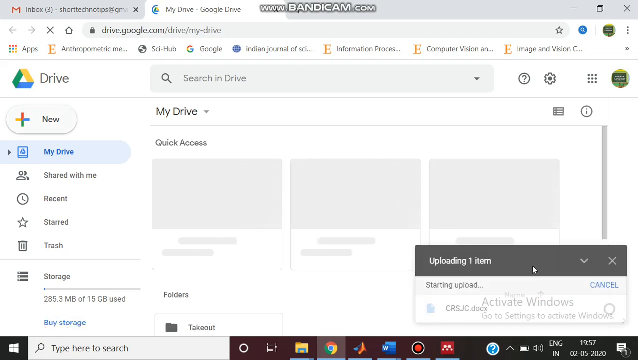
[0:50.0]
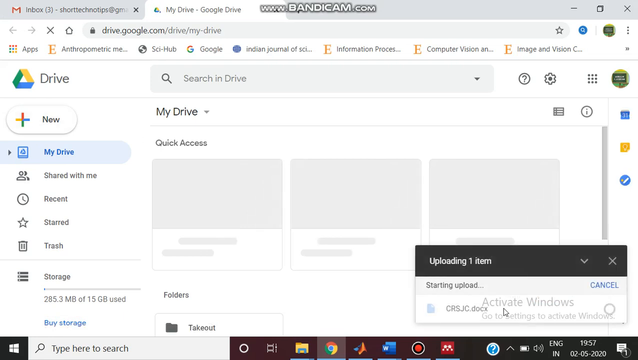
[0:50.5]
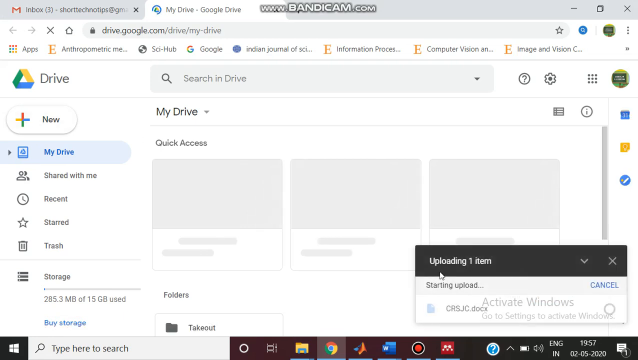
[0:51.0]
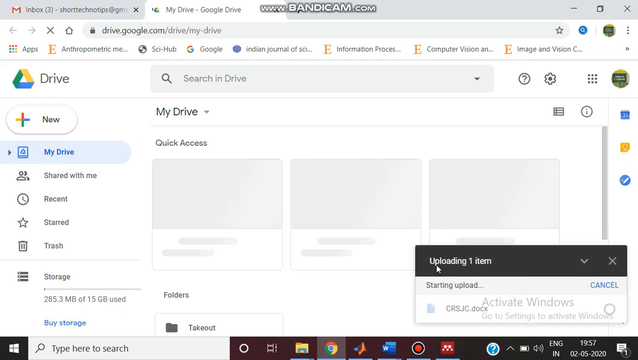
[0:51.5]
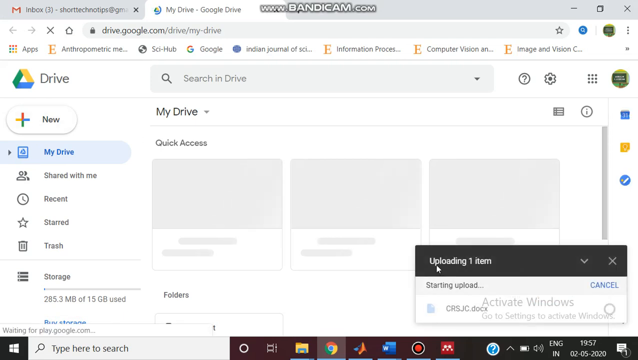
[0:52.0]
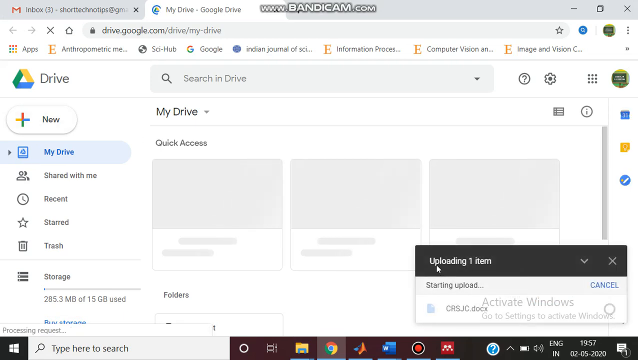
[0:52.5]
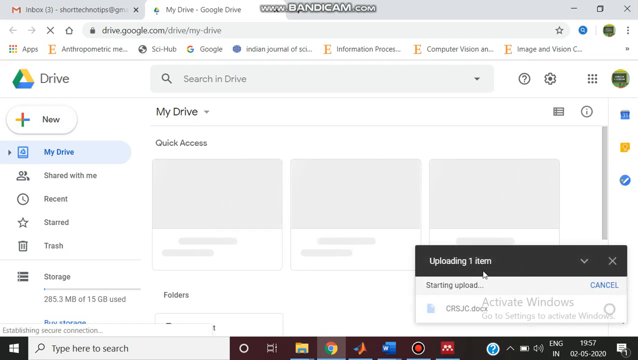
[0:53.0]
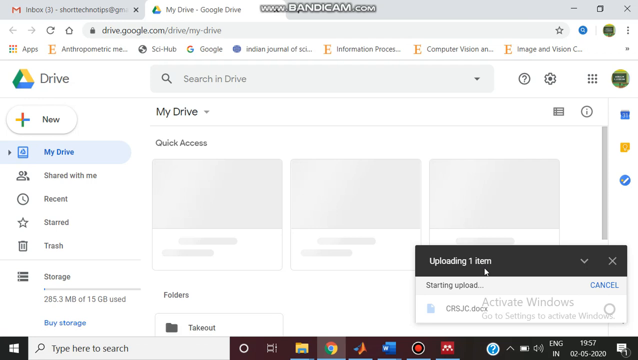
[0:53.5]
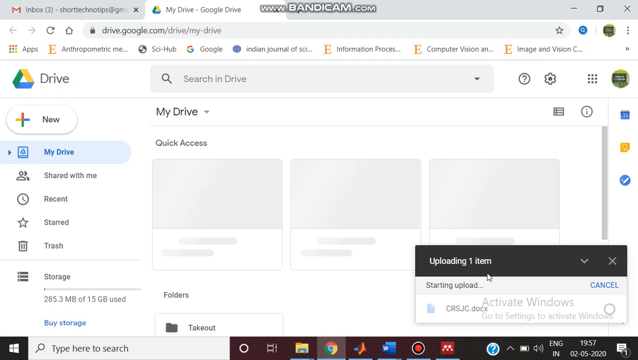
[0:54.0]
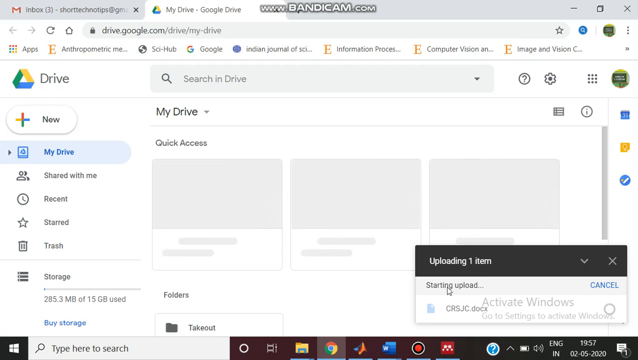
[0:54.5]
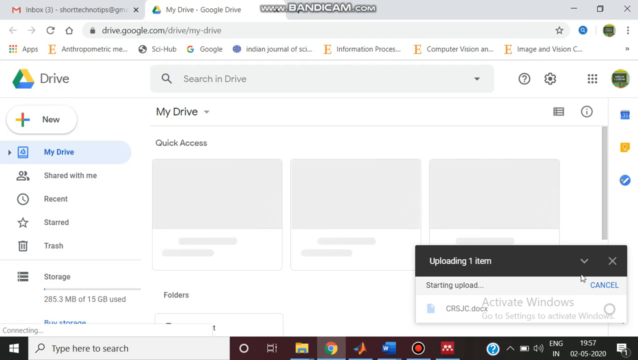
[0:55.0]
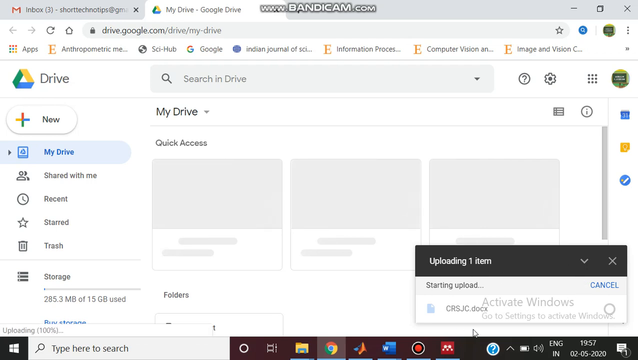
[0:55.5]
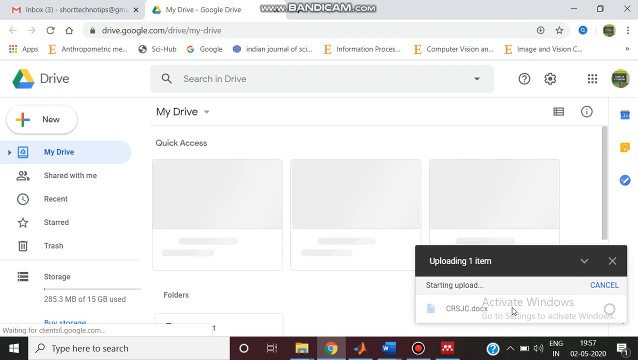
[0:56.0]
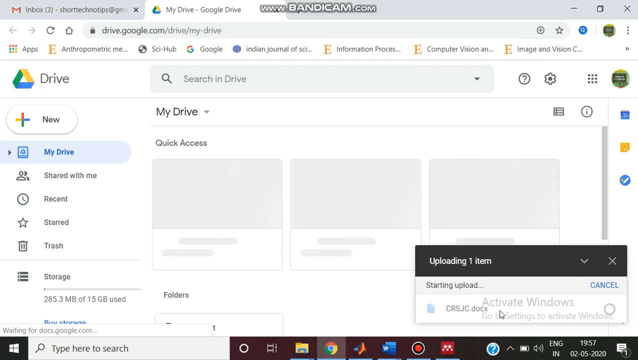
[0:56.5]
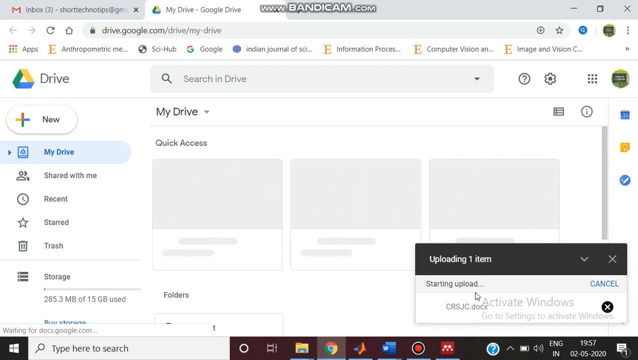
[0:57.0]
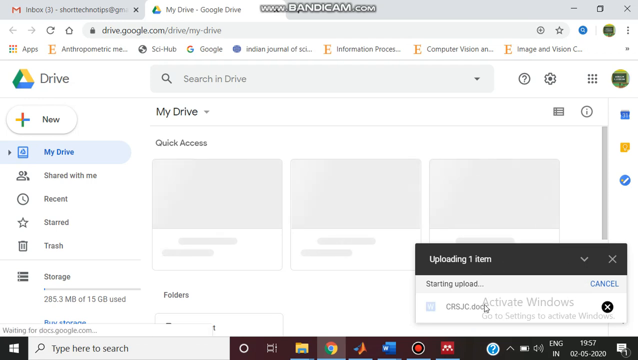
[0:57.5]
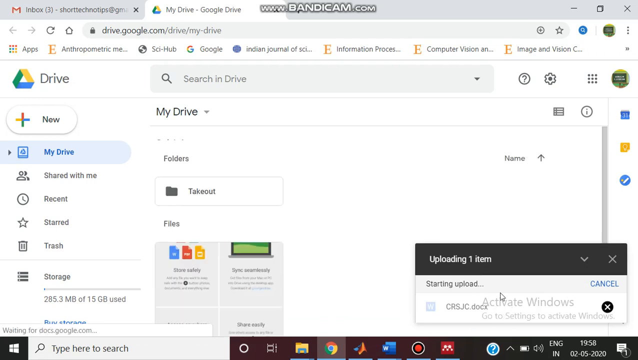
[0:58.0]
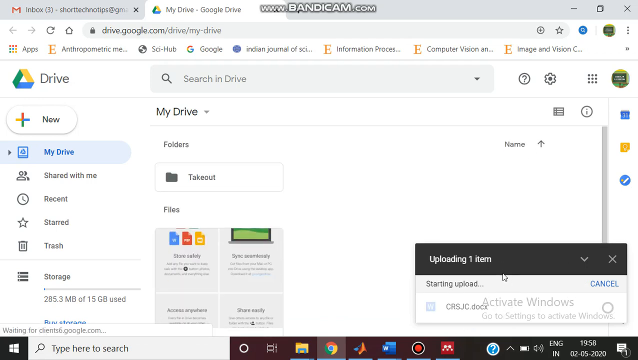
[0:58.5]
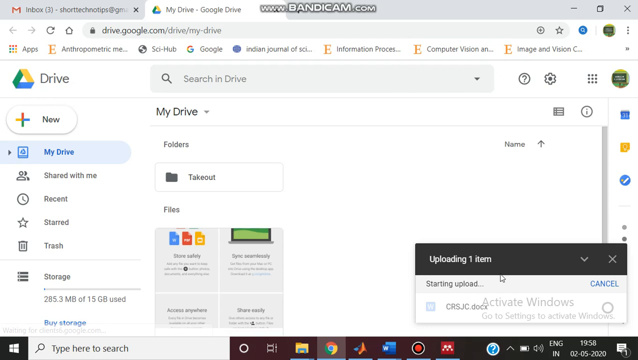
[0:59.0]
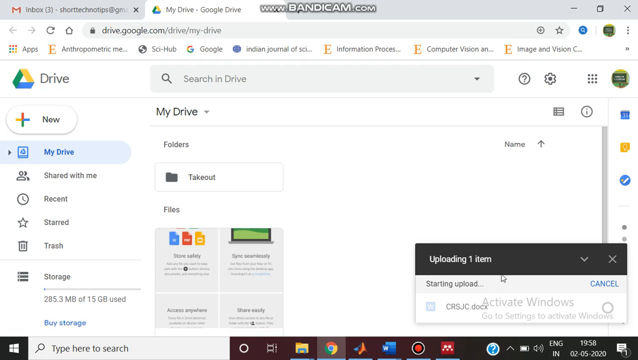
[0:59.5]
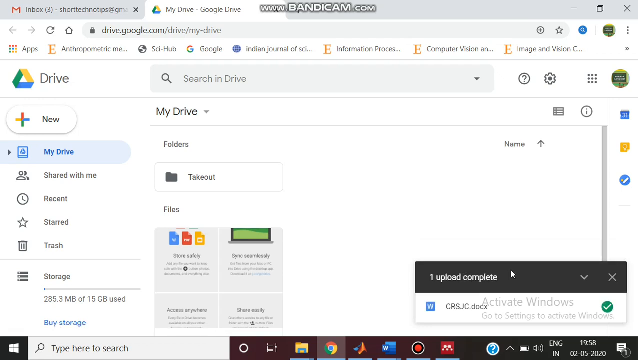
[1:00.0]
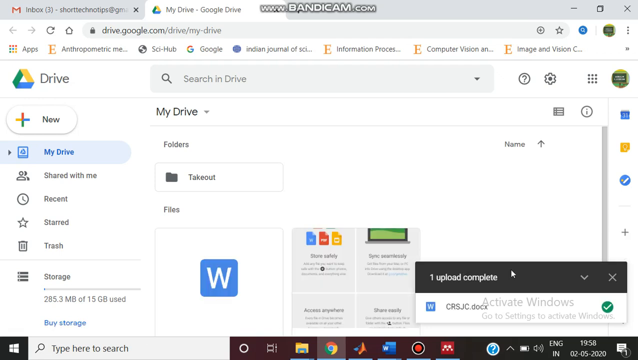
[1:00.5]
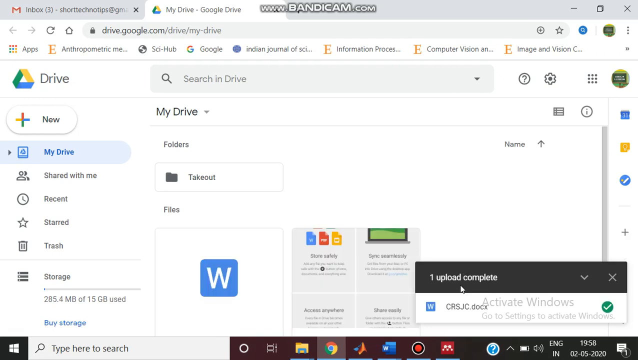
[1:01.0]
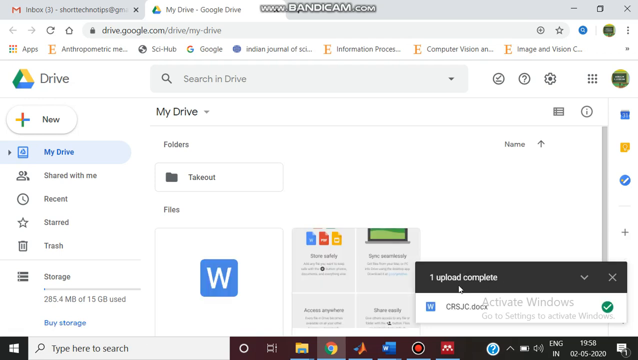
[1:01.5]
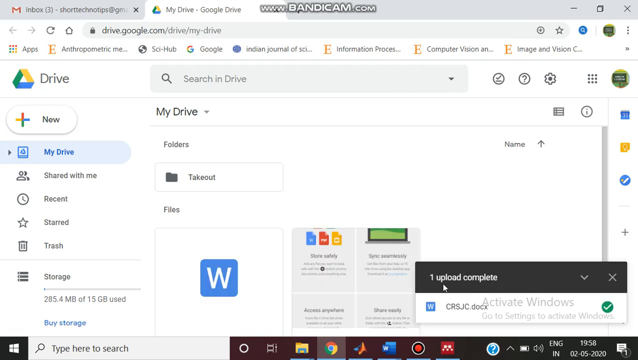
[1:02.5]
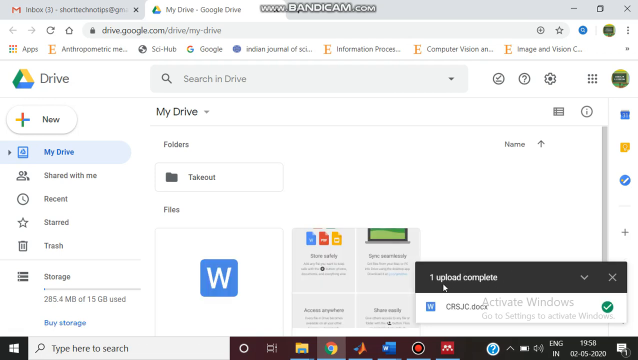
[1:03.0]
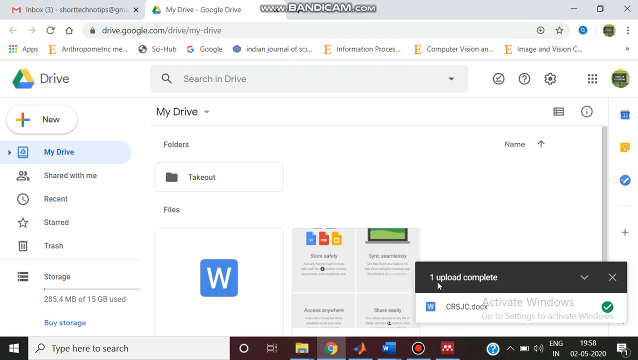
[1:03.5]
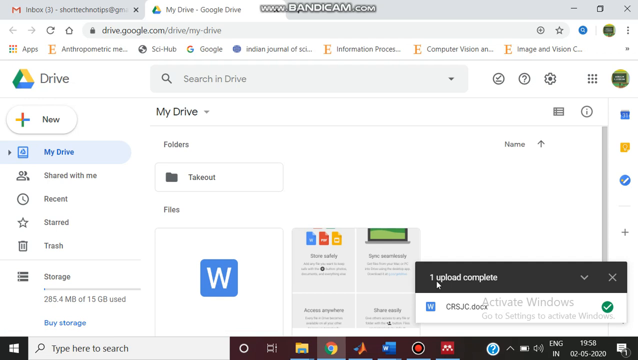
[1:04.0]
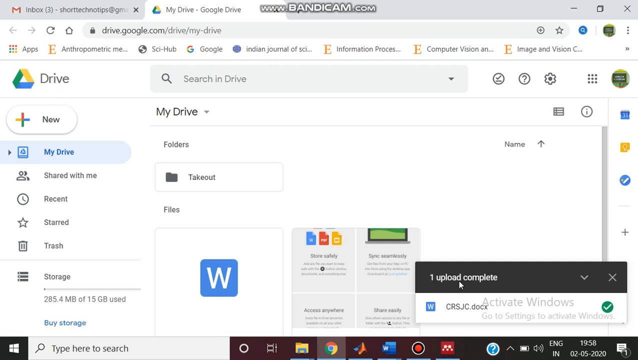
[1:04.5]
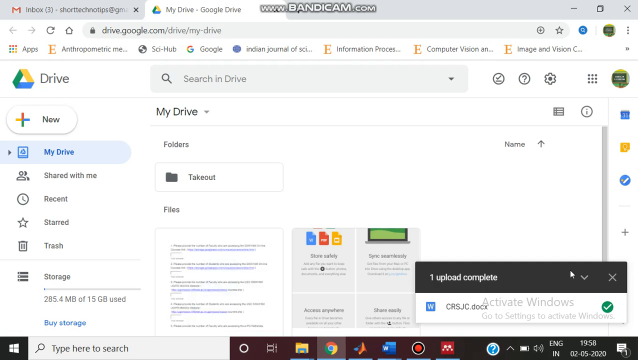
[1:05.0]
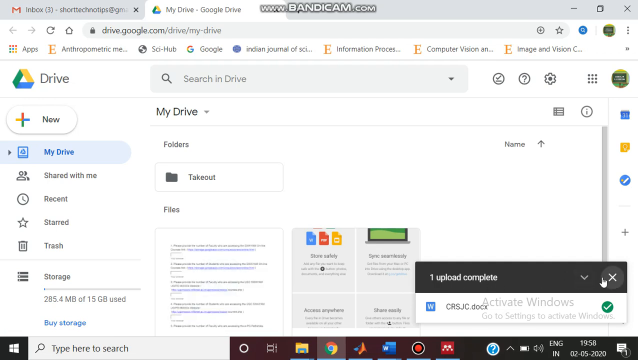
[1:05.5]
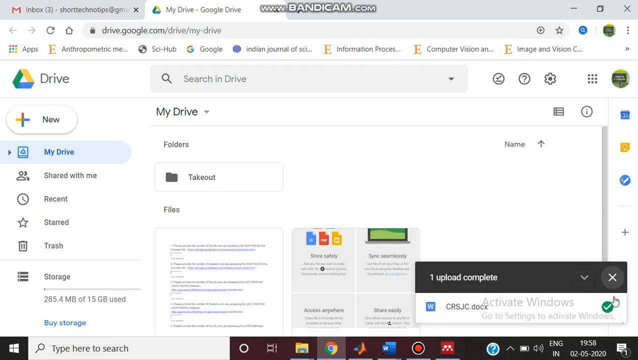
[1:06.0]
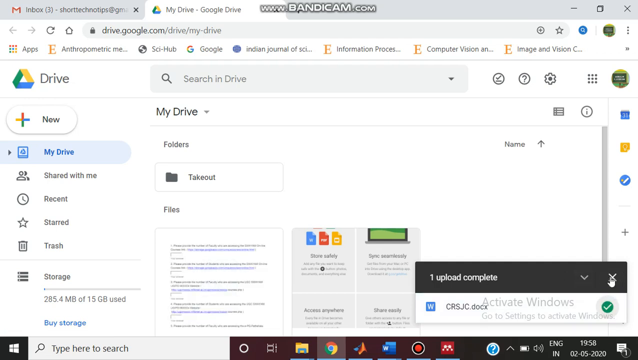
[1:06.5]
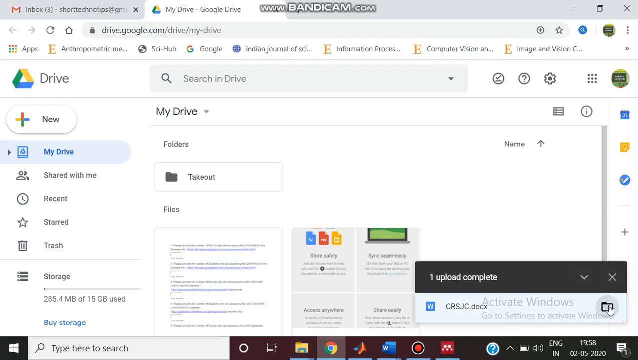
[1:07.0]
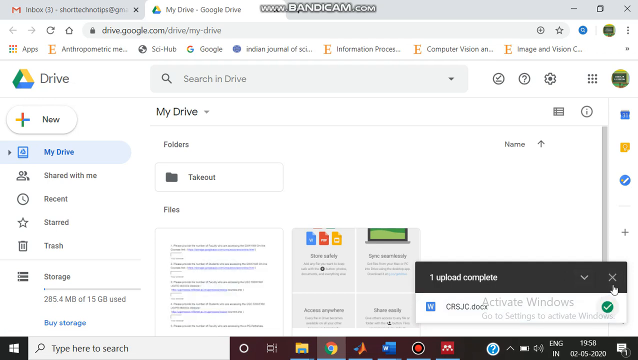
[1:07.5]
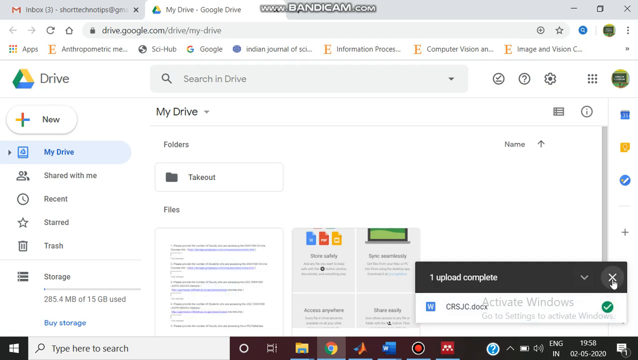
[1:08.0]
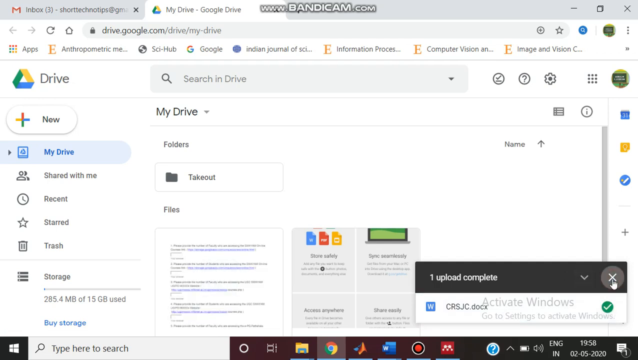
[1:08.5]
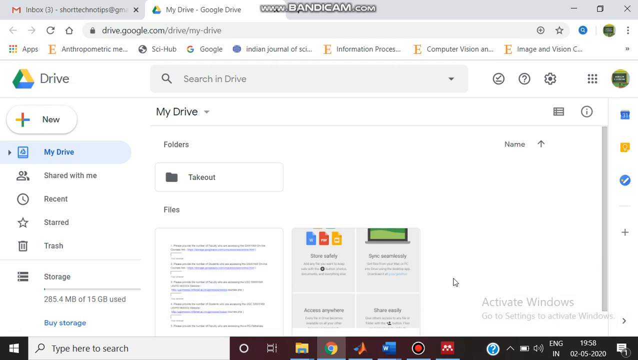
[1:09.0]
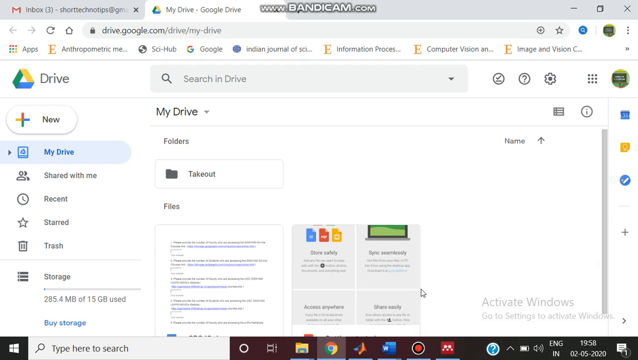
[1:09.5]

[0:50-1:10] Two tabs are open on a Windows PC: Gmail, which is not visible, and Google Drive, which is loading. A box at the lower right has a border saying it is uploading one item, along with a Cancel button. The person moves the cursor over the box, and it says "one upload completed". They close the box and scroll up the Google Drive page. The address www.bandicam.com is at the top of the screen. A column of tabs runs down the left: a tab for a new document, then My Drive, which is highlighted and is the current location, then Shared with me, Recent, Starred and Trash. At the very bottom the storage reads 285.3 megabytes of 15 gigabytes used. There is a toolbar at the bottom.